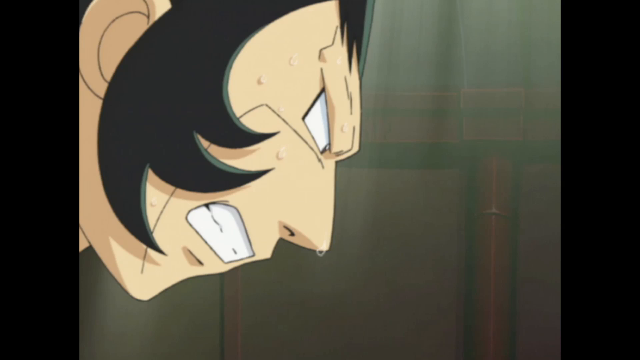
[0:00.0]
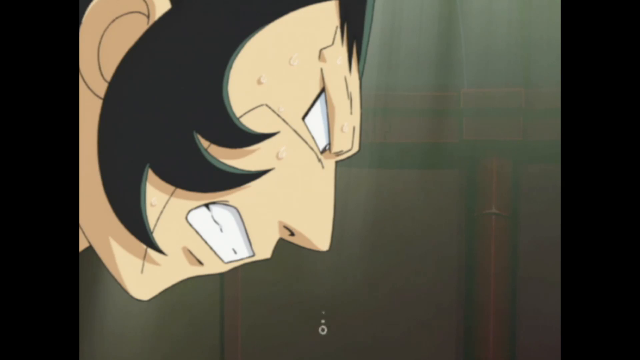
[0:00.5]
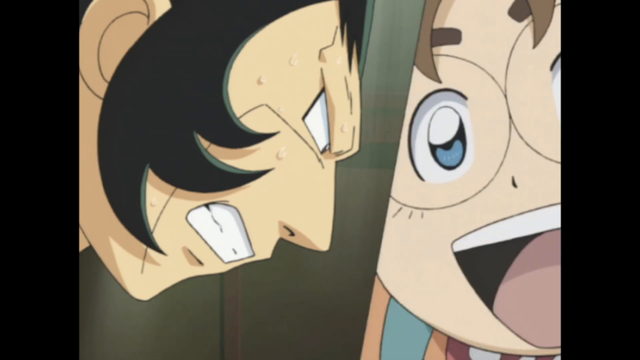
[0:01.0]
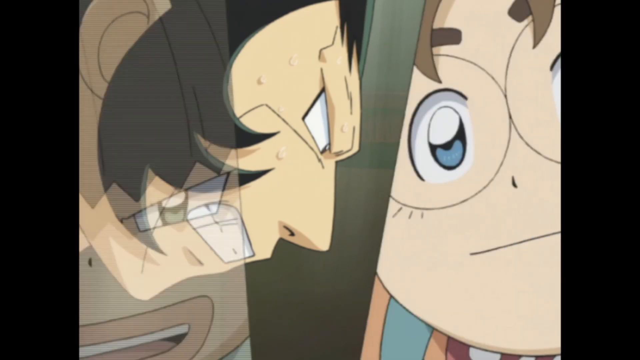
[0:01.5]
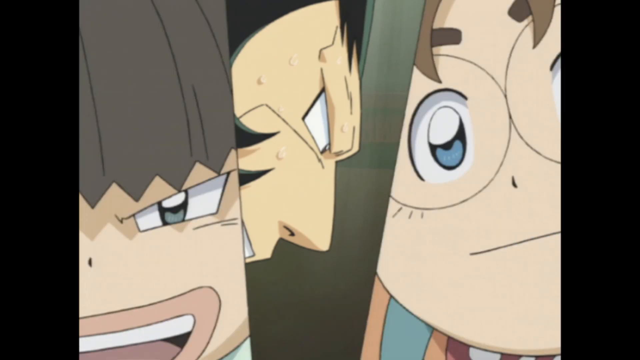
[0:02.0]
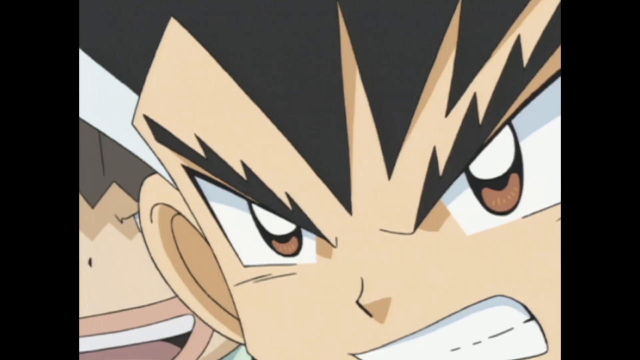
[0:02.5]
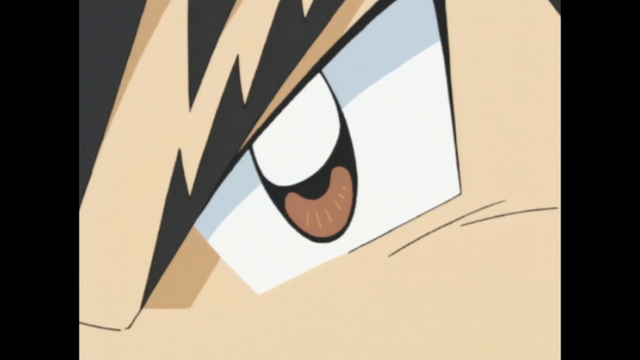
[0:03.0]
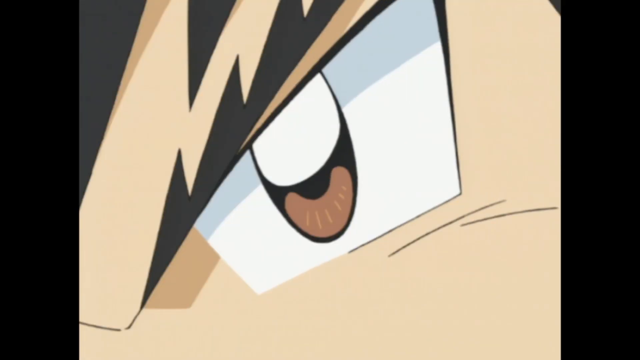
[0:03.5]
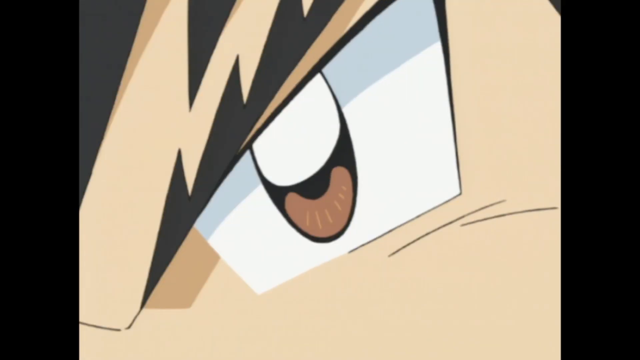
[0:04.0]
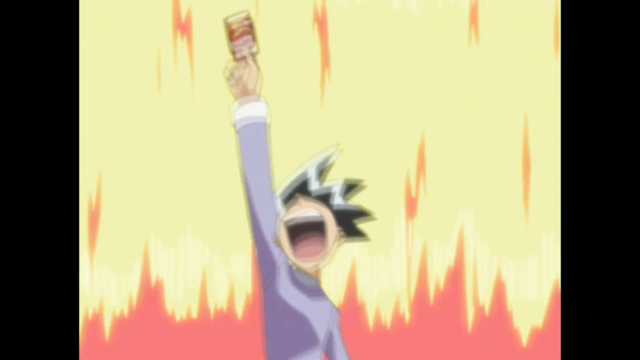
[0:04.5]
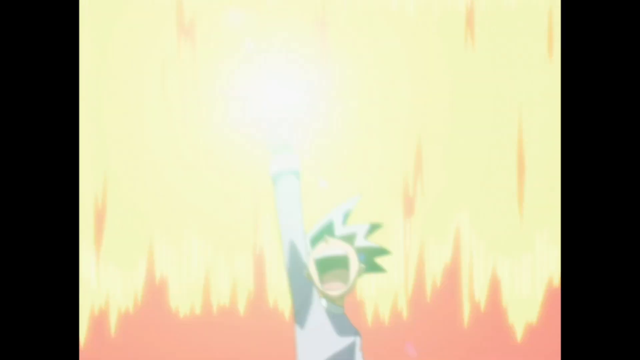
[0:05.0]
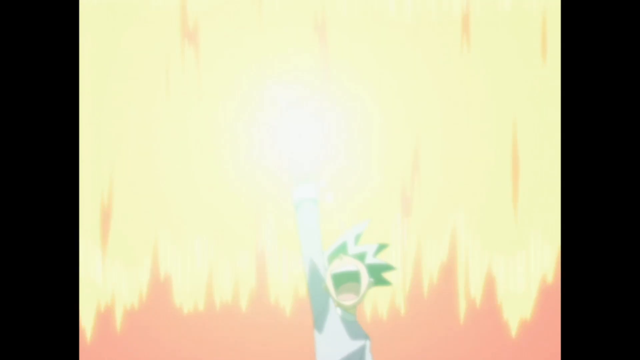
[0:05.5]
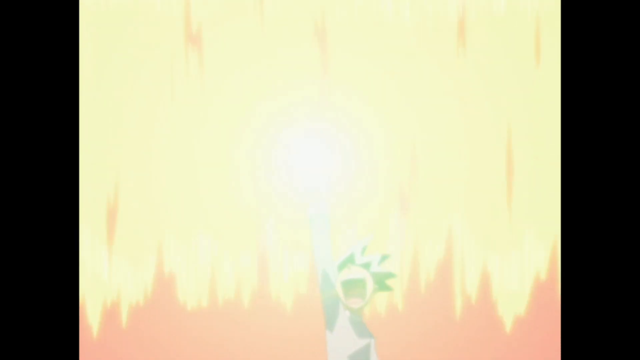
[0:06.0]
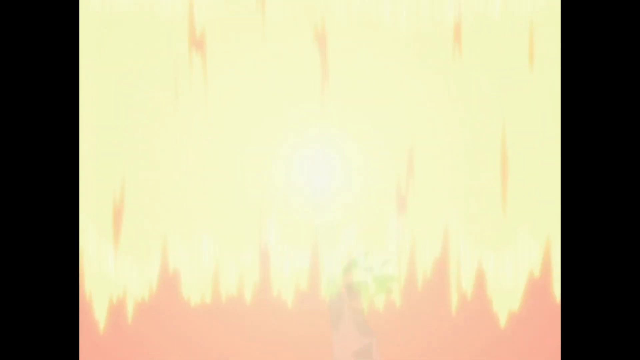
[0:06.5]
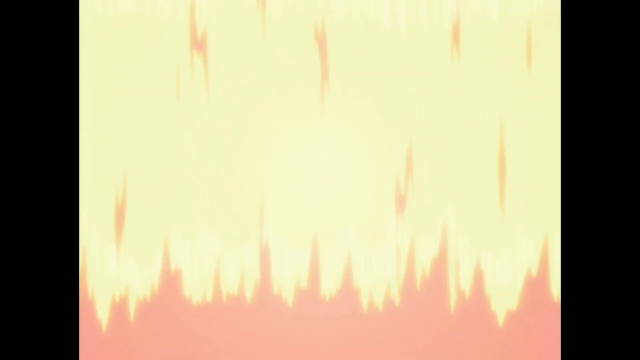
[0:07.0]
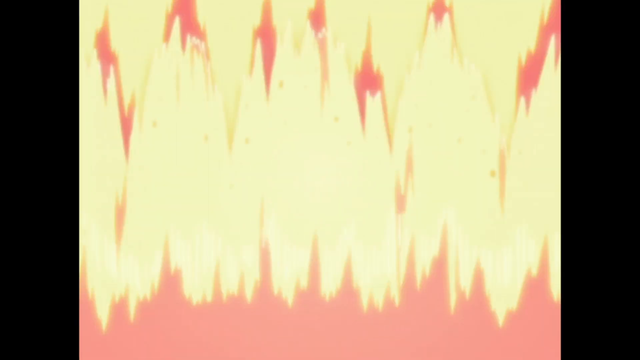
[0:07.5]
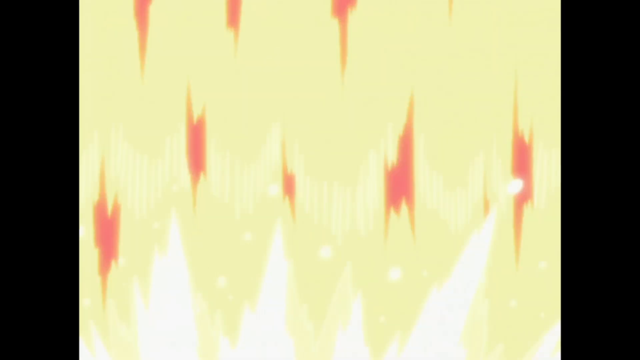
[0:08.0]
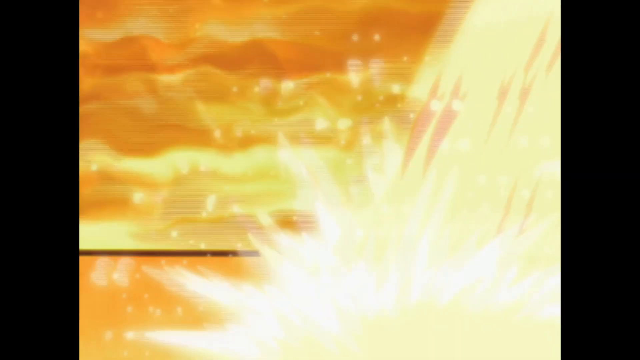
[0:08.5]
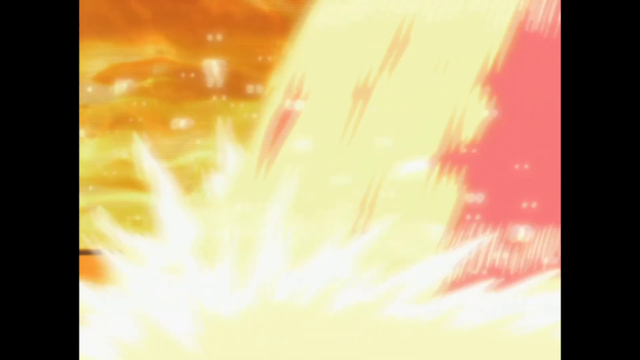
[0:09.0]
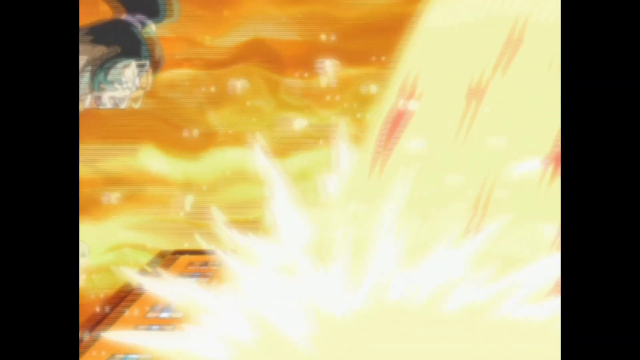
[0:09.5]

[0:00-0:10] Characters appear; they do not have beards. The male character grits his teeth, an expression suggesting they want to fight. Another character appears, and they start talking, looking each other in the eye. One of the characters, who looks like a young adult or a young kid, shouts and raises his right hand, and fire or a blaze appears. The adult male is shirtless, wearing only underpants, and looks at the young adult or young kid; it looks like he wants to fight the young adult who raised his hand. The characters are Asian. One is sweating, with a drip of sweat coming from his nose. He looks furious, looks down, and his fist is ready to fight.